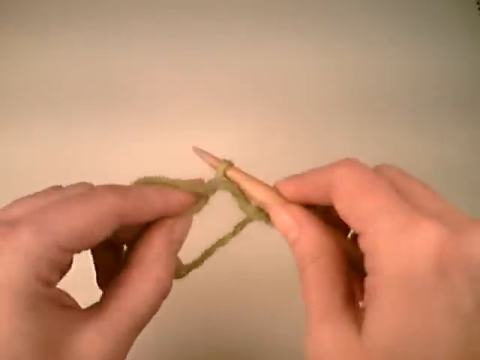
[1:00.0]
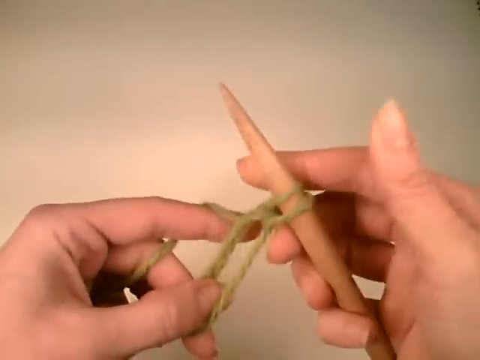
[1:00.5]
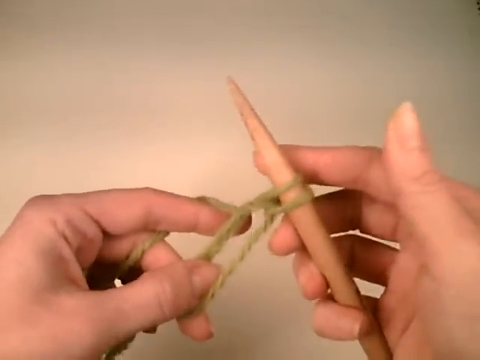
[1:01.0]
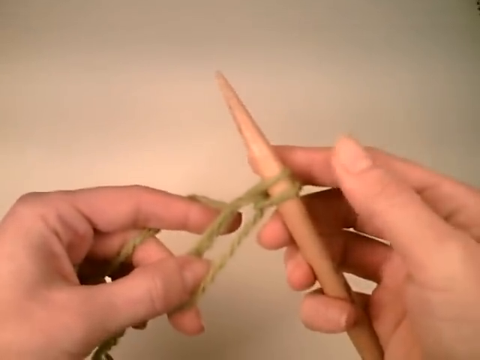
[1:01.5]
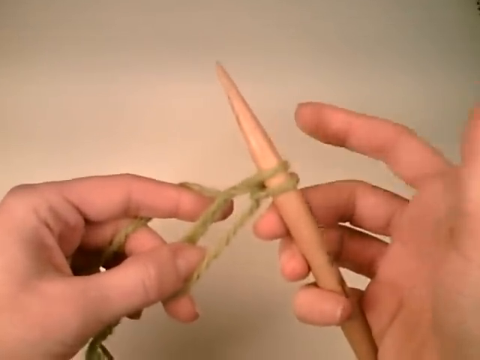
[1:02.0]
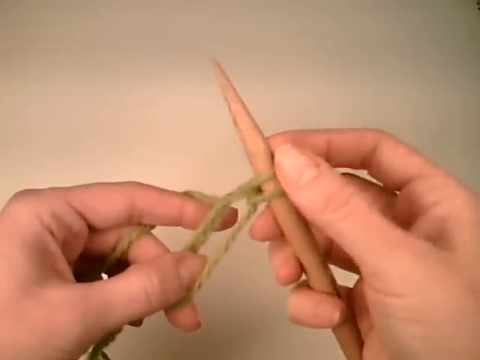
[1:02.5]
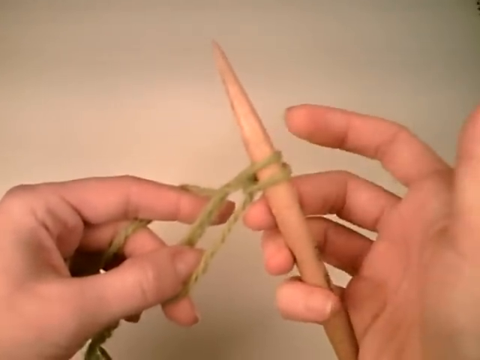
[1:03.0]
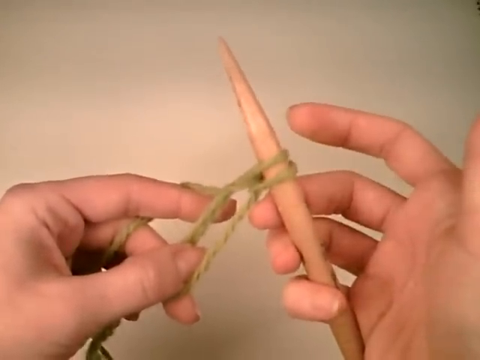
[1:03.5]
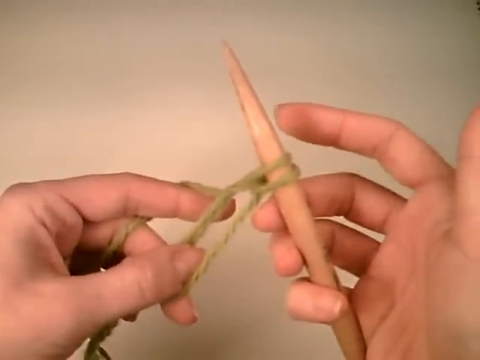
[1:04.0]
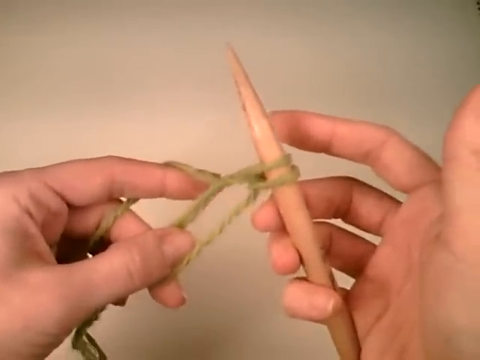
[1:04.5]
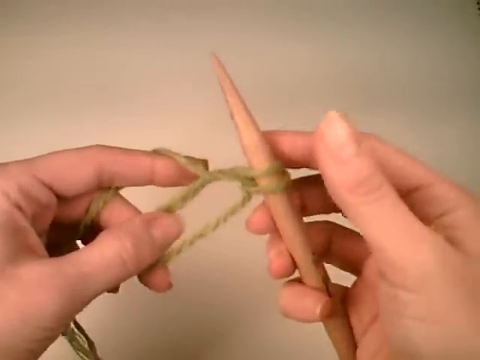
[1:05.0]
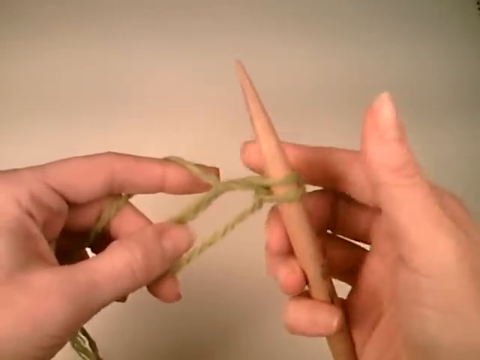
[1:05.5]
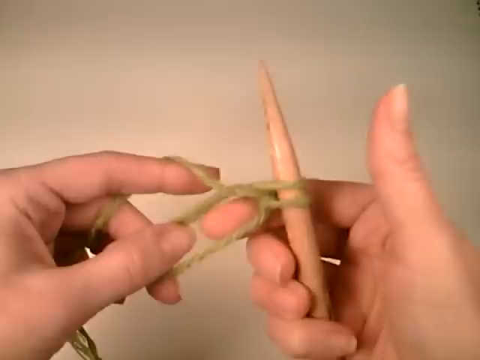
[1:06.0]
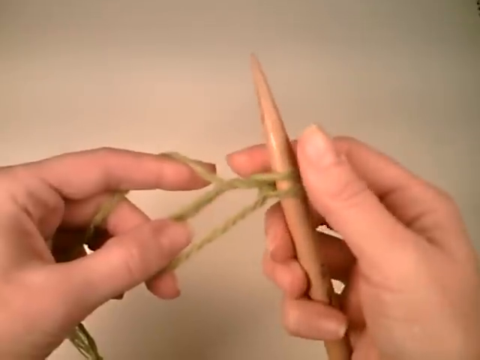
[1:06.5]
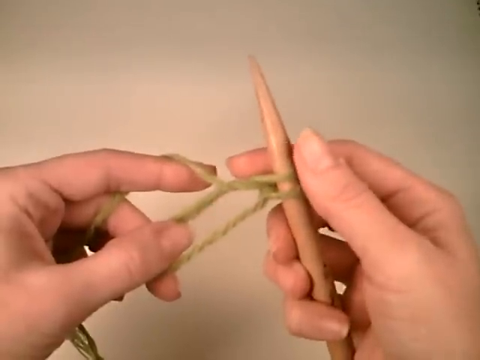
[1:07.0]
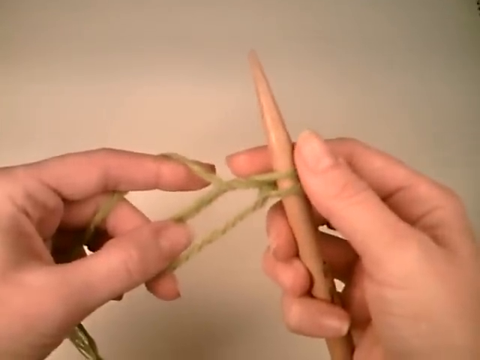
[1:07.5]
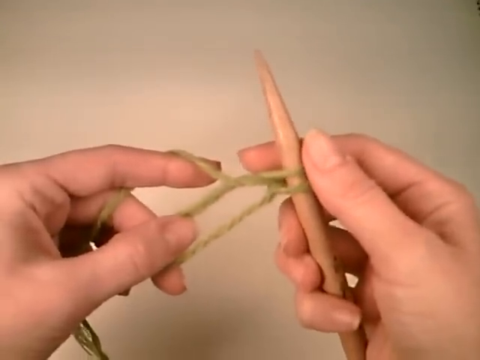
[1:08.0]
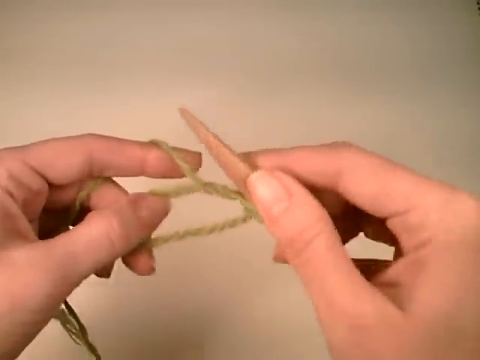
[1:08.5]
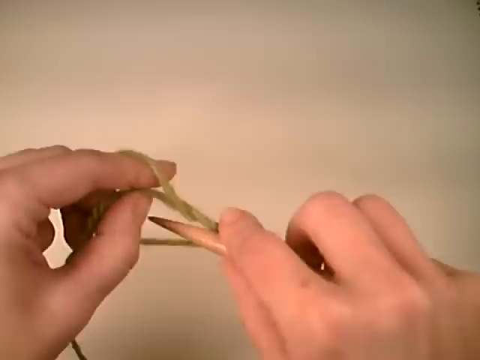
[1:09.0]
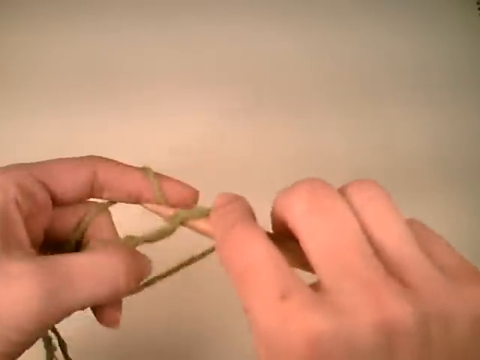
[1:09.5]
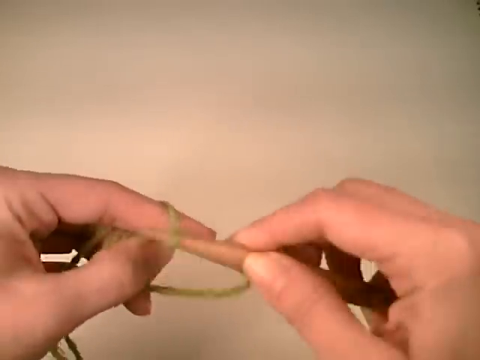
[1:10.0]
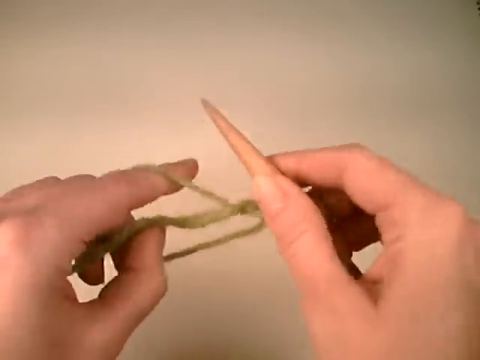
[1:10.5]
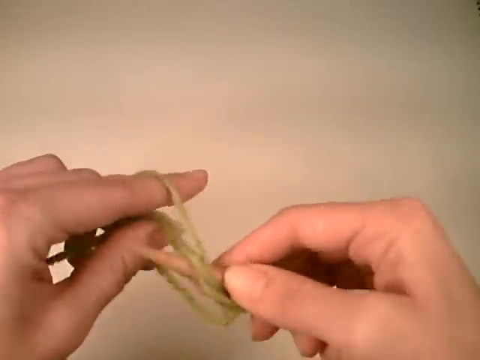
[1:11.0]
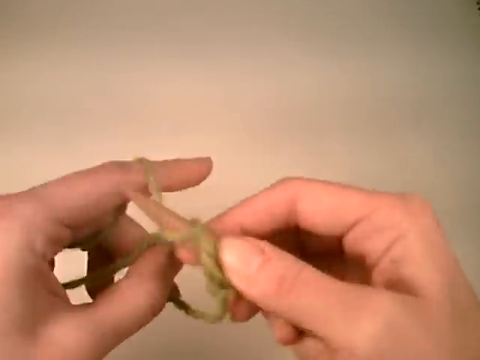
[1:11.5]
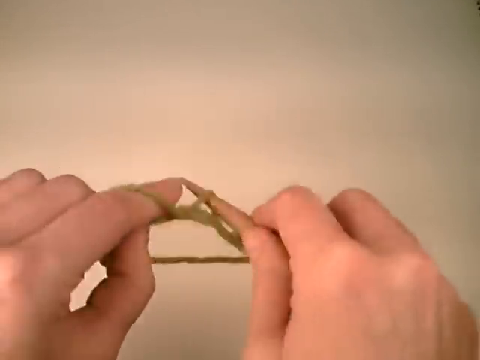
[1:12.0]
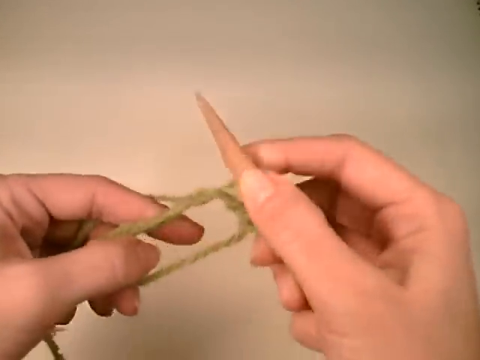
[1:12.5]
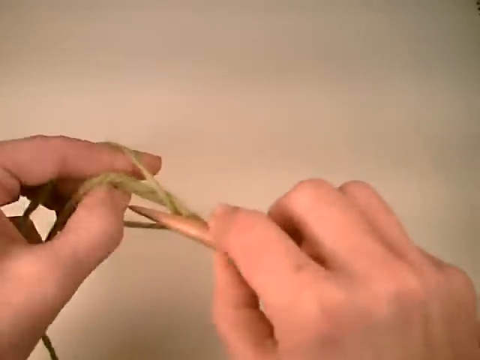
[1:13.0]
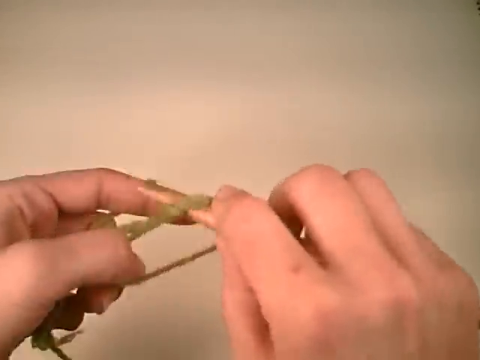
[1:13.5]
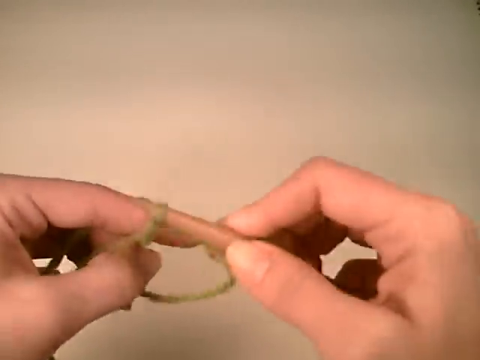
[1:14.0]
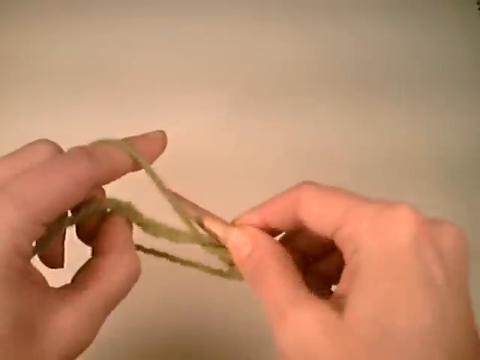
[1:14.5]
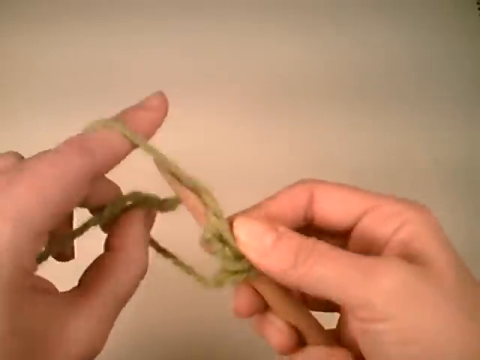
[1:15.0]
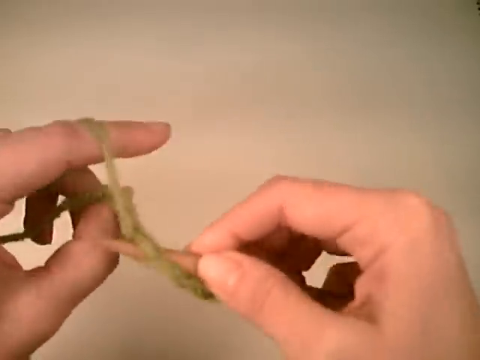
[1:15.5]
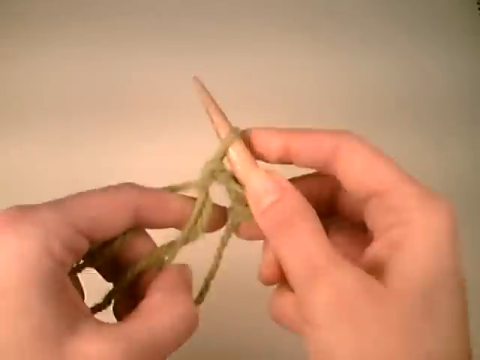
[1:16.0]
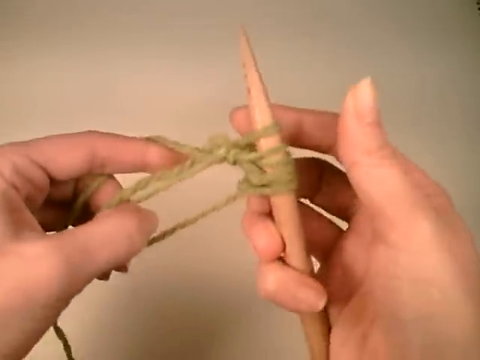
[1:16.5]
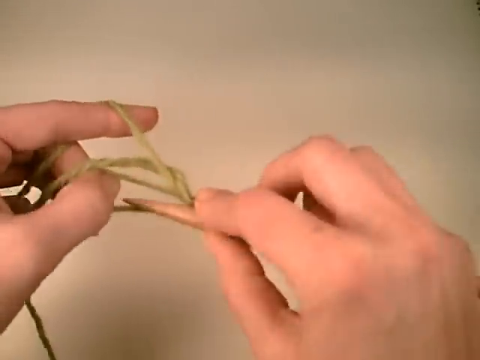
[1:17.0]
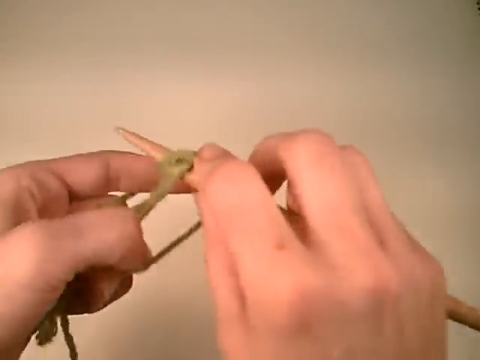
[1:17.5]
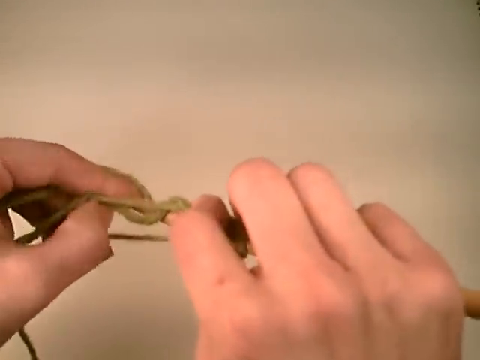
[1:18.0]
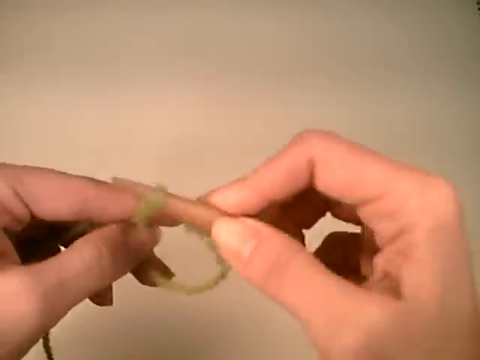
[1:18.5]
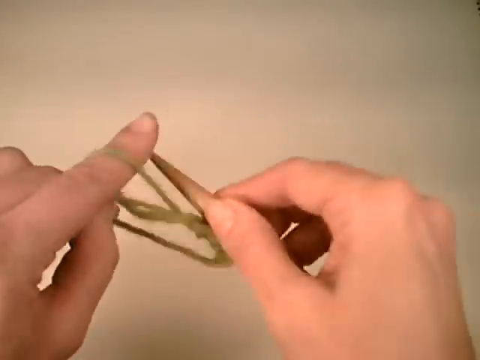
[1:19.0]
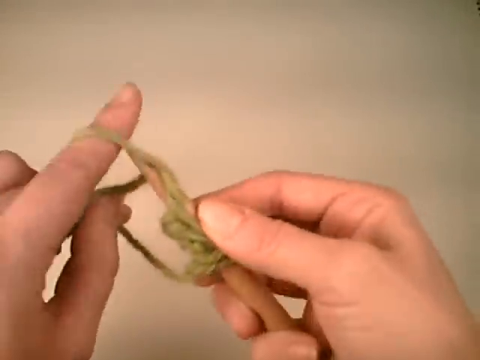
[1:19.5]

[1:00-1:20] An individual knits against a brownish background. Two hands are visible, one mainly holding a wooden knitting needle and the other holding part of a golden thread. The person is possibly a white woman, based on the skin, and has a bit of nail on both thumbs. The needle goes in and out of the thread in a way typical of knitting, and some parts of the thread are intertwined. There is no text in the video. From the occasional pauses, the woman appears to be explaining as she knits. The whole needle is not visible: only the front pointed part can be seen, while the bottom section becomes visible only for a brief moment.